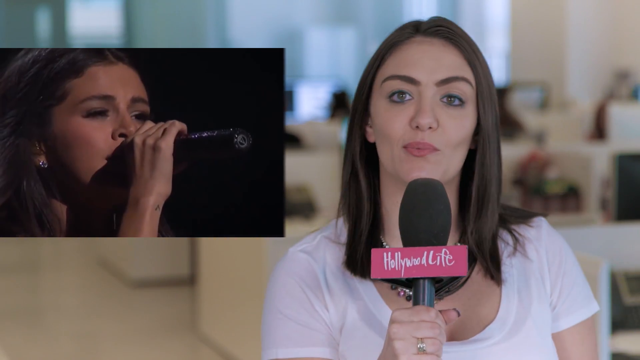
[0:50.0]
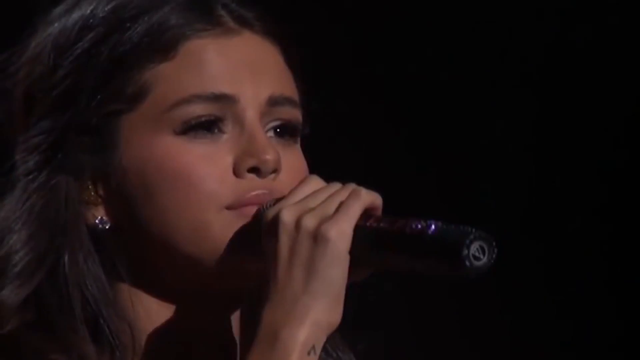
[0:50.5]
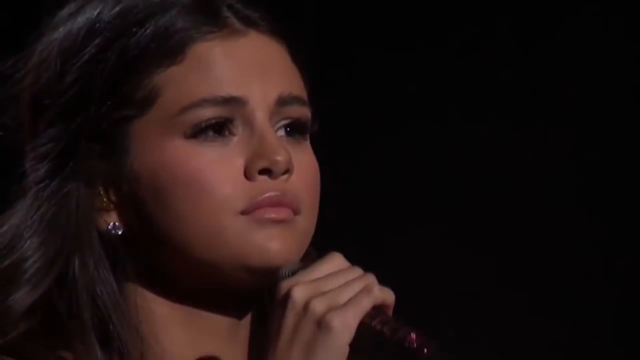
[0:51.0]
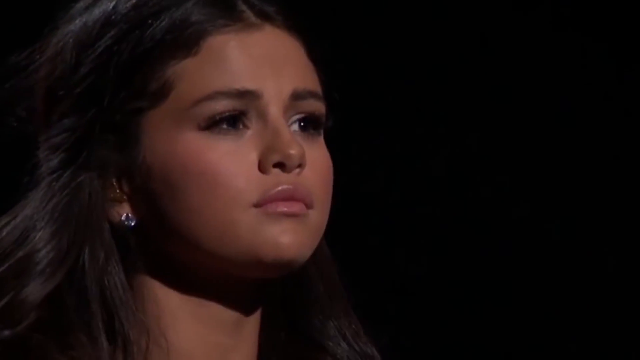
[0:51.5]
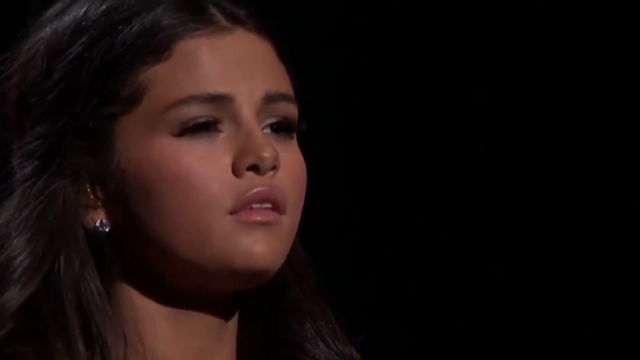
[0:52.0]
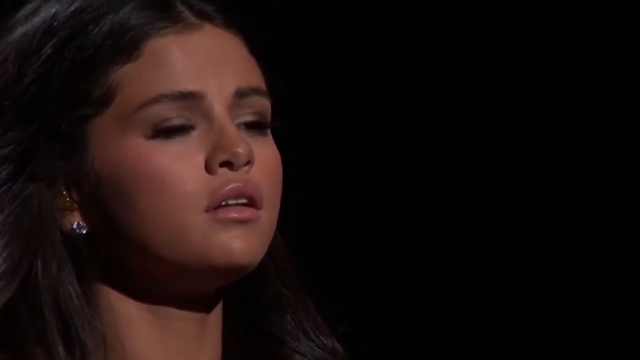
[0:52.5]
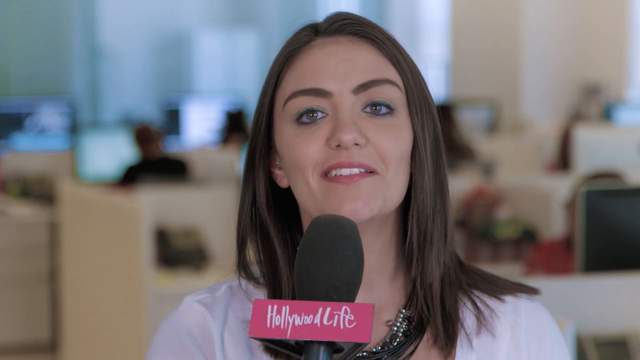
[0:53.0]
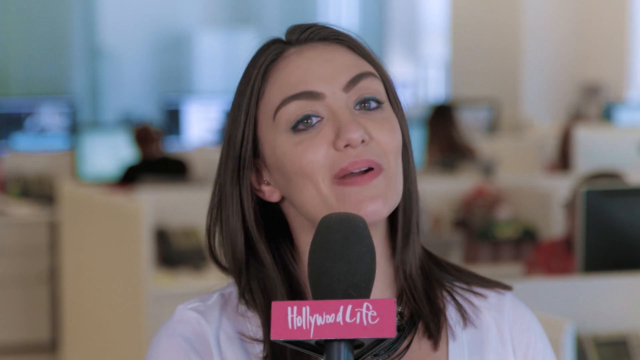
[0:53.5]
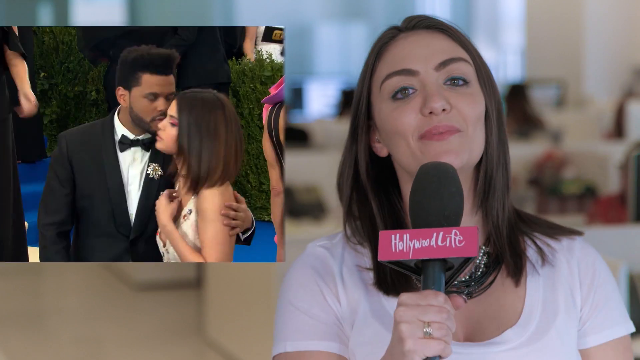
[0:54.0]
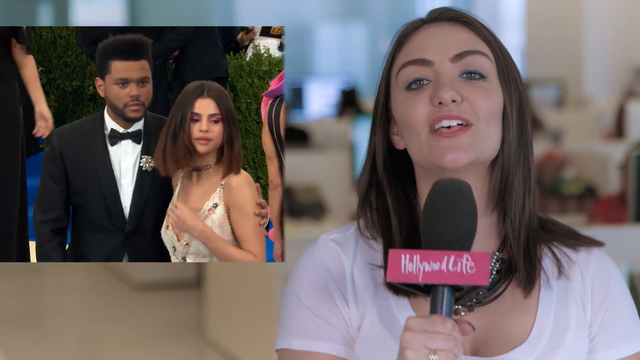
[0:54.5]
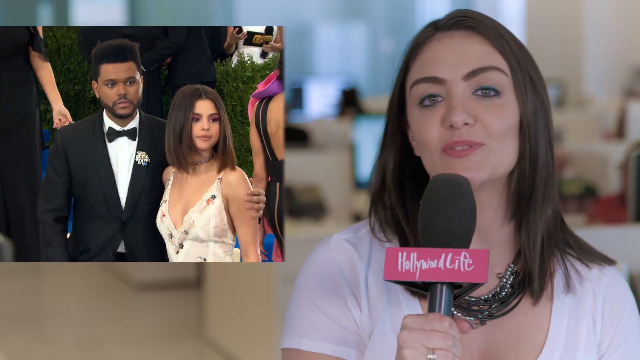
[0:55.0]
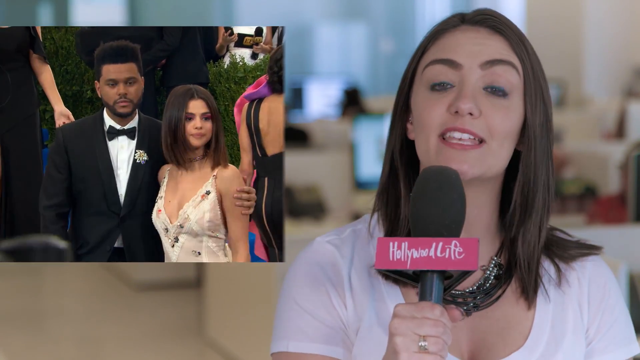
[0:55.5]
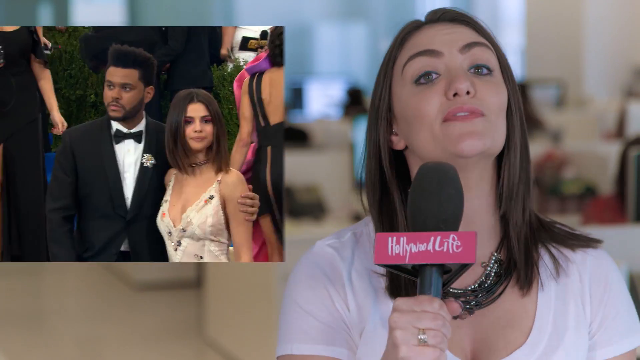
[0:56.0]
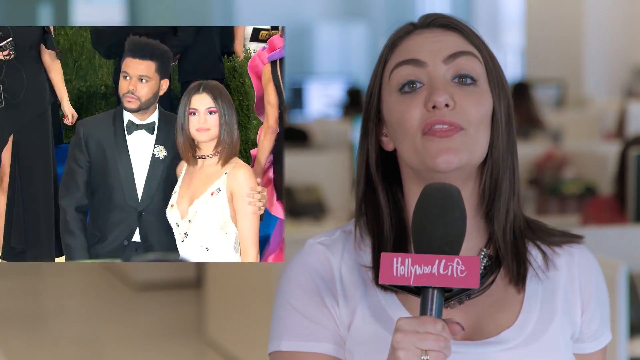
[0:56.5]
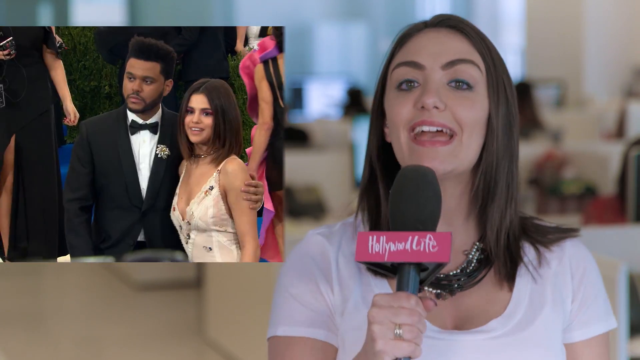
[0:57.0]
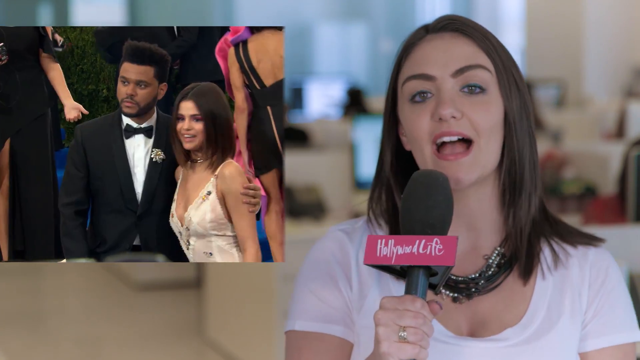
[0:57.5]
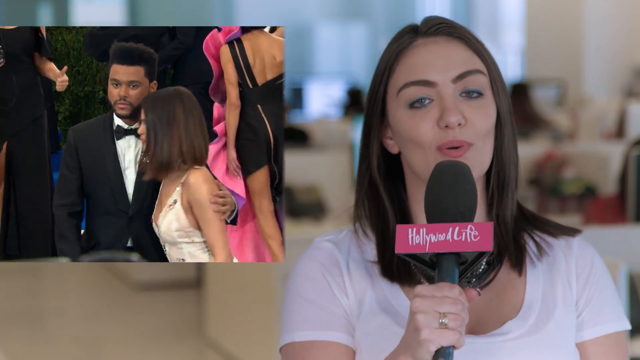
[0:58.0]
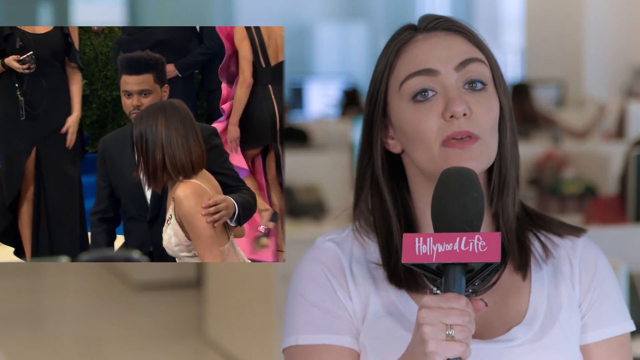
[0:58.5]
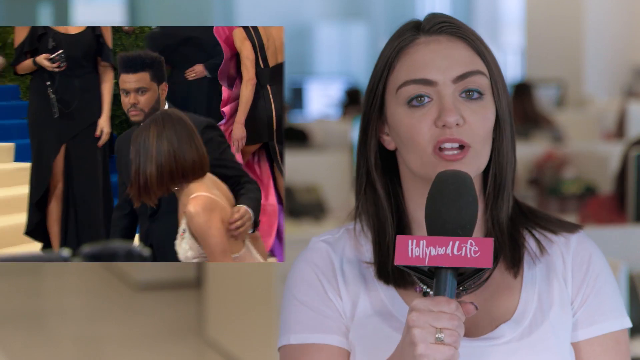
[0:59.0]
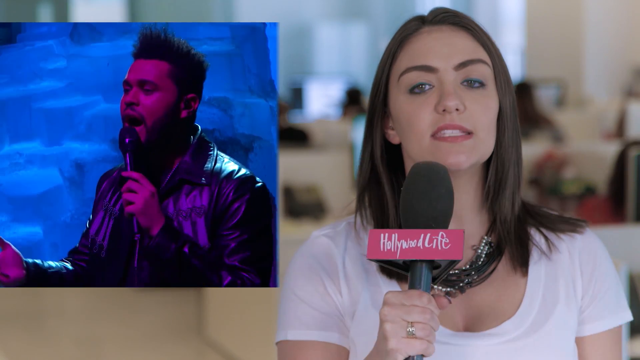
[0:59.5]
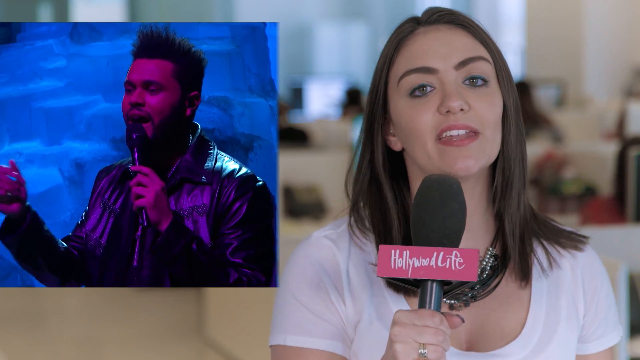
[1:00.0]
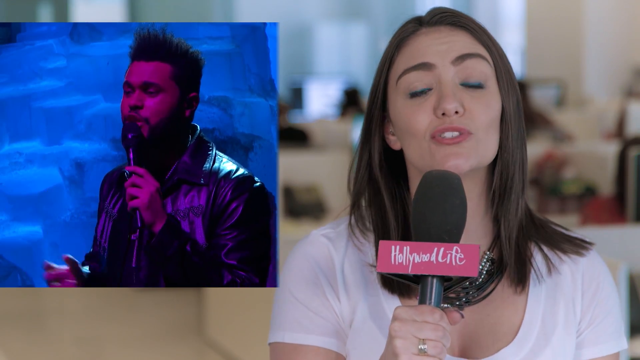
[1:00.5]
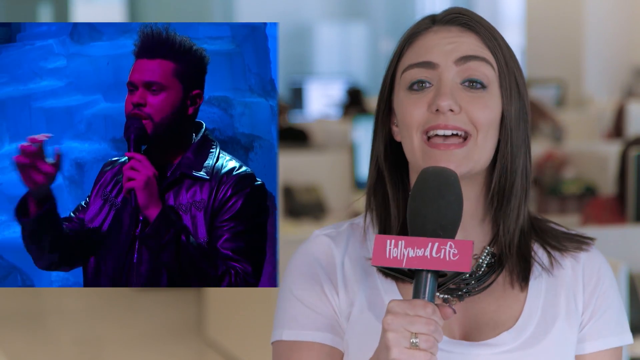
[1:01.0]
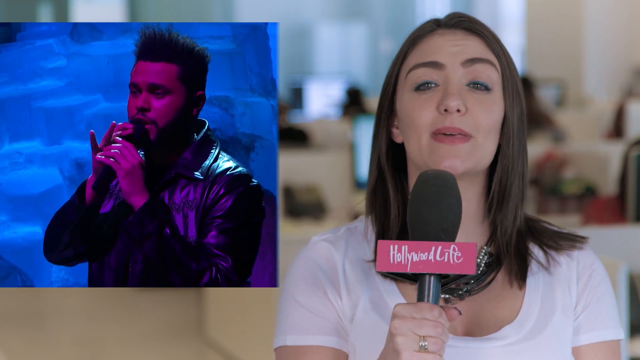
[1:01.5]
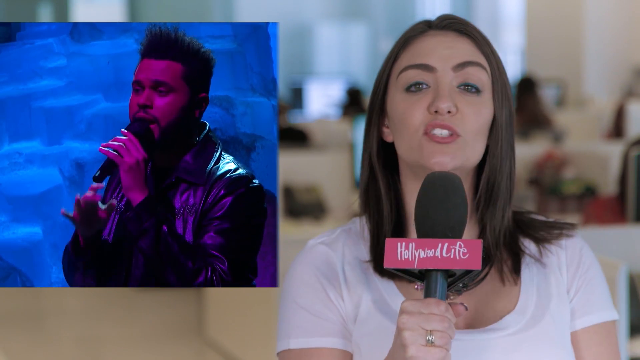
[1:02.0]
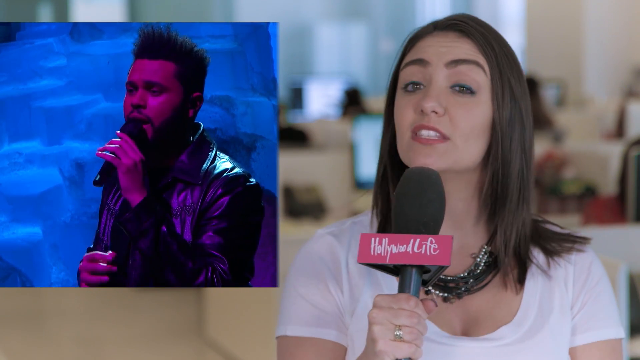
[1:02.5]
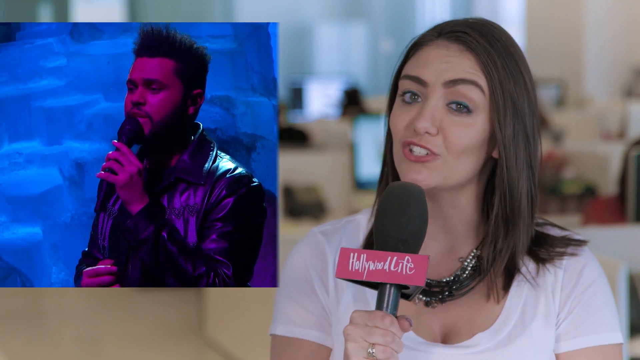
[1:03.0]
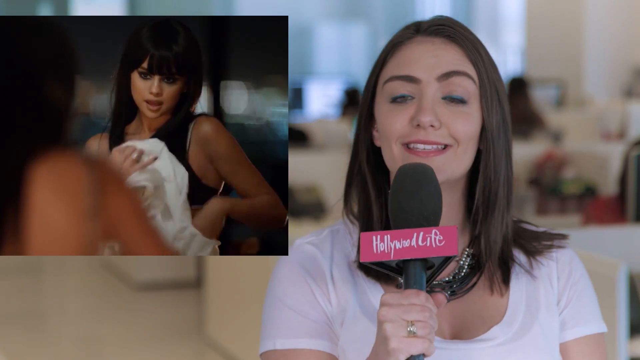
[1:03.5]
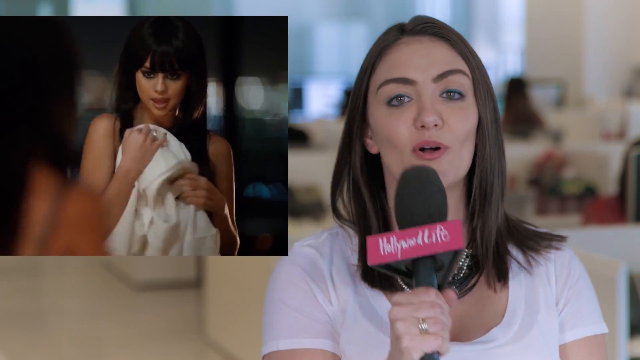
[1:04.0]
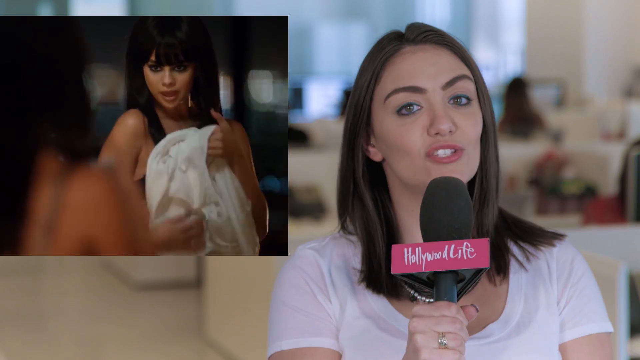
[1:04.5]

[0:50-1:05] The Hollywood Life reporter with the pink microphone speaks toward the camera. To her right, many superimposed videos show Selena Gomez in different scenarios, including one of her at an awards show. Another music star, The Weeknd, then appears, and the videos return to Selena Gomez singing.